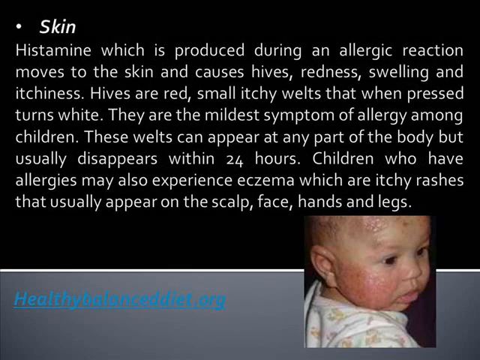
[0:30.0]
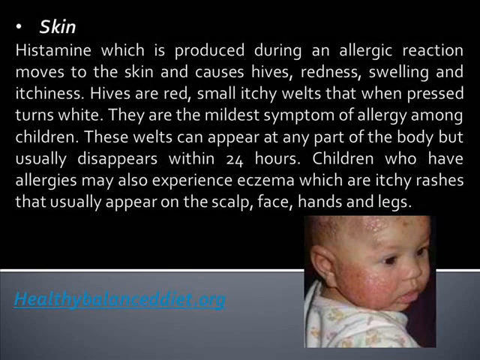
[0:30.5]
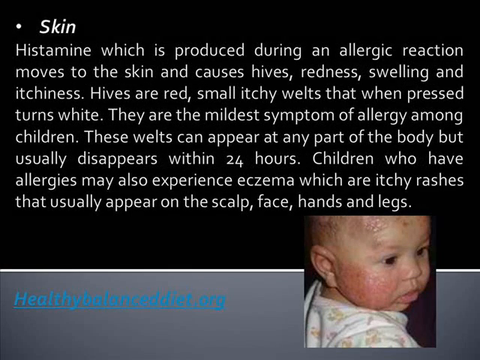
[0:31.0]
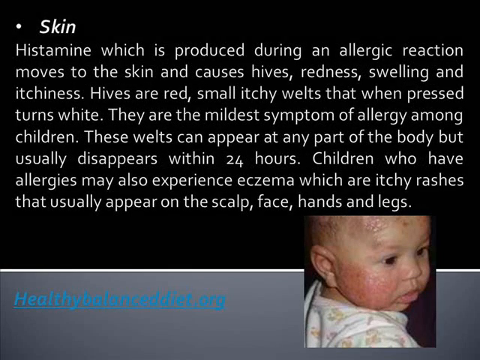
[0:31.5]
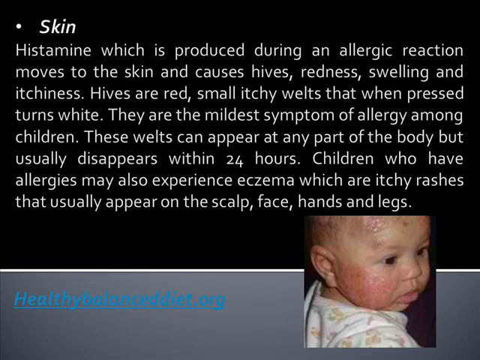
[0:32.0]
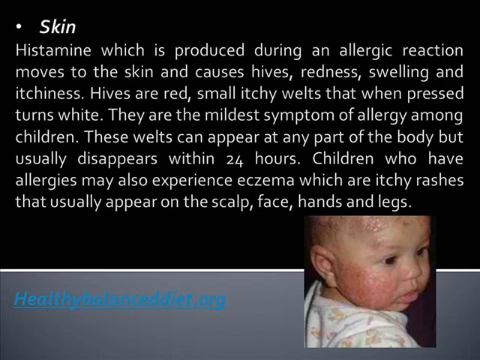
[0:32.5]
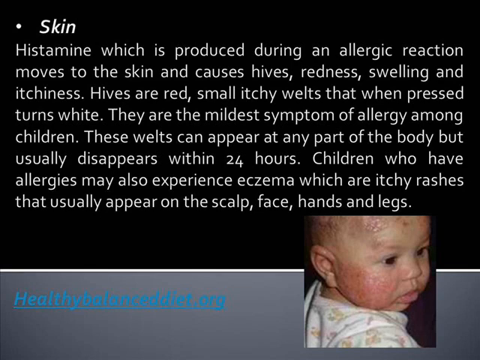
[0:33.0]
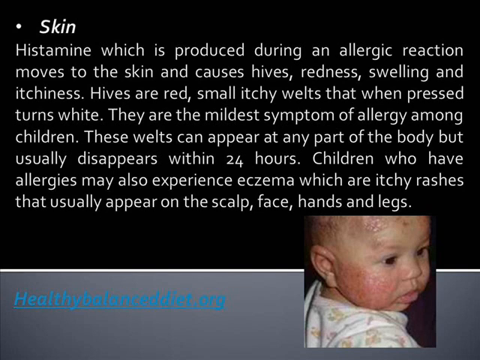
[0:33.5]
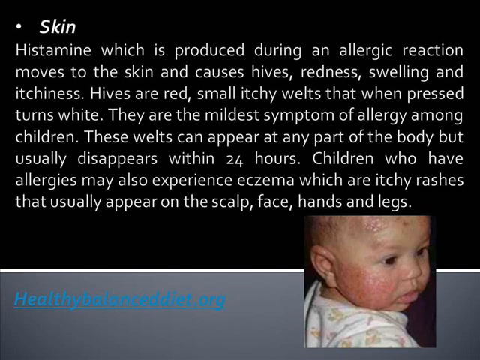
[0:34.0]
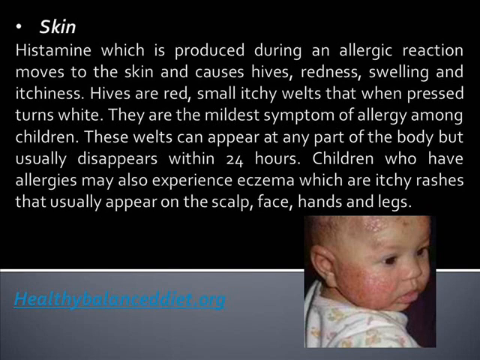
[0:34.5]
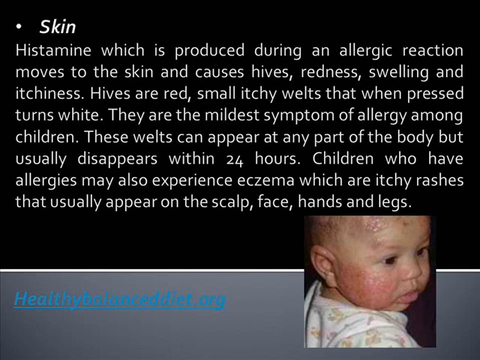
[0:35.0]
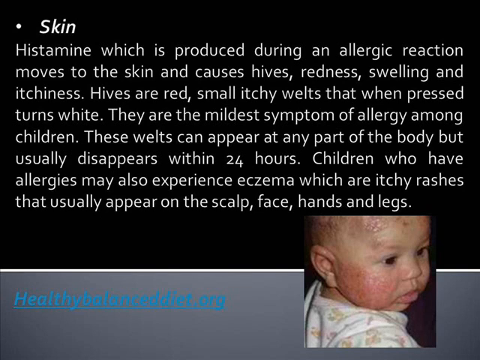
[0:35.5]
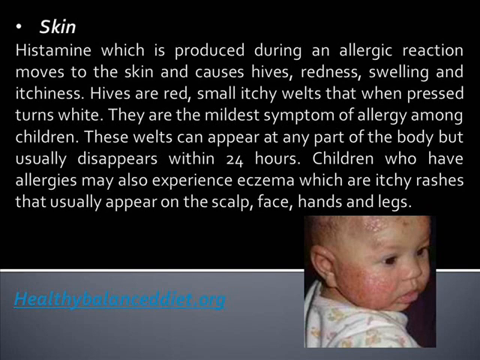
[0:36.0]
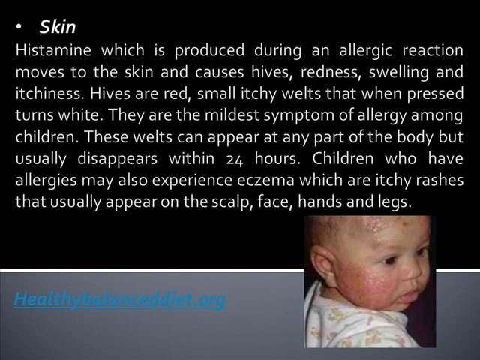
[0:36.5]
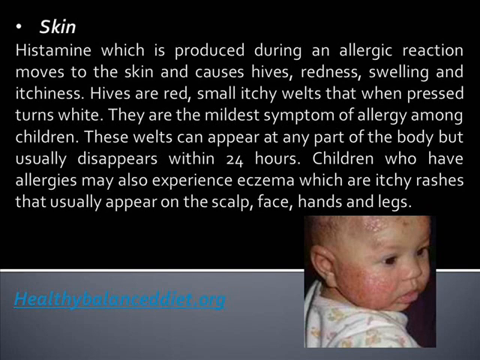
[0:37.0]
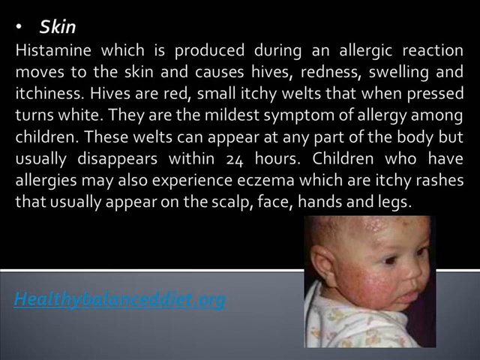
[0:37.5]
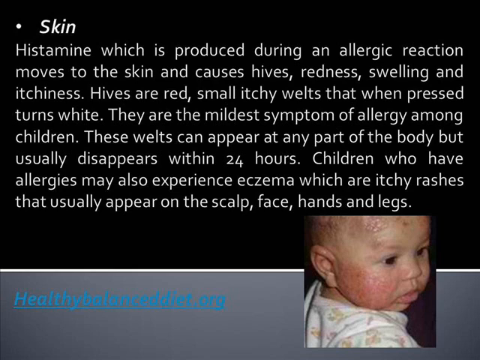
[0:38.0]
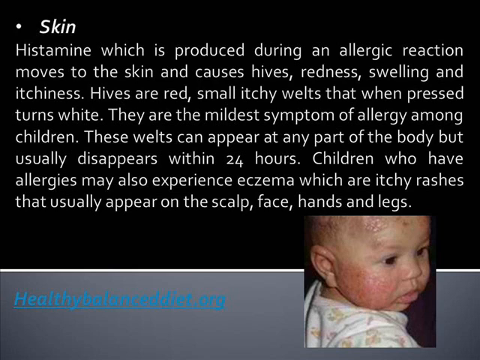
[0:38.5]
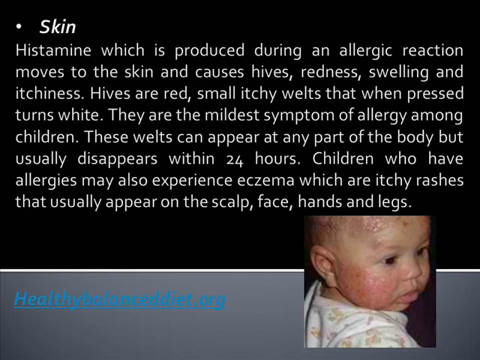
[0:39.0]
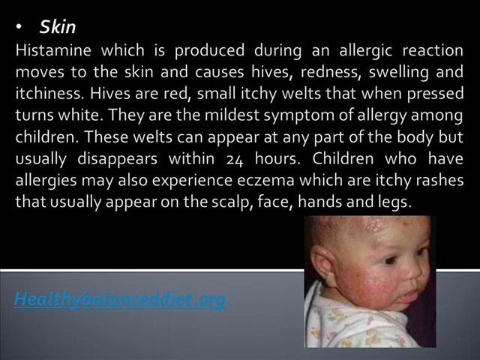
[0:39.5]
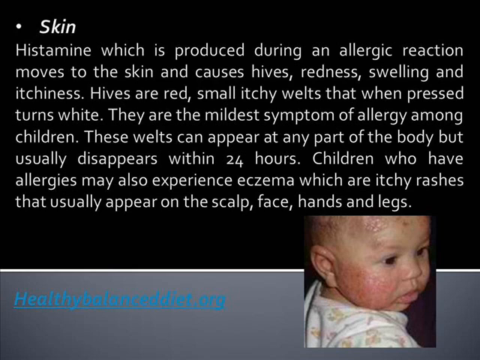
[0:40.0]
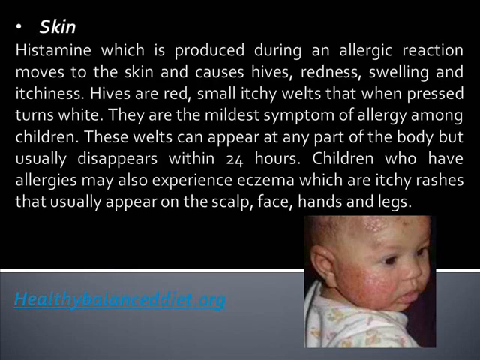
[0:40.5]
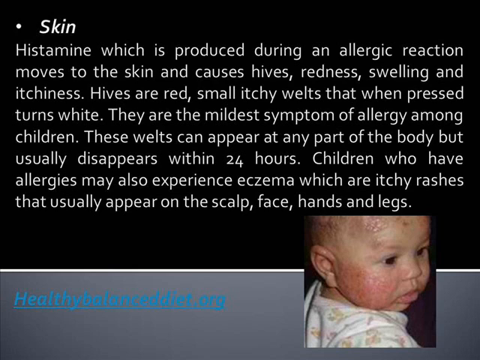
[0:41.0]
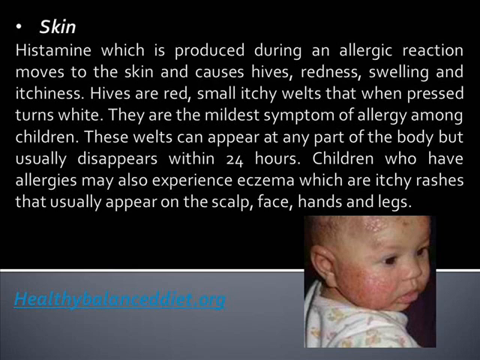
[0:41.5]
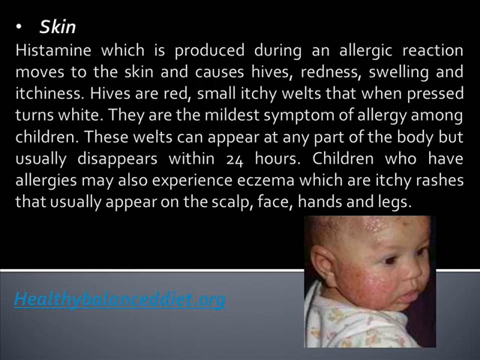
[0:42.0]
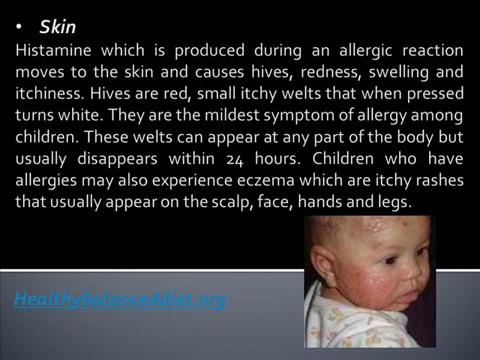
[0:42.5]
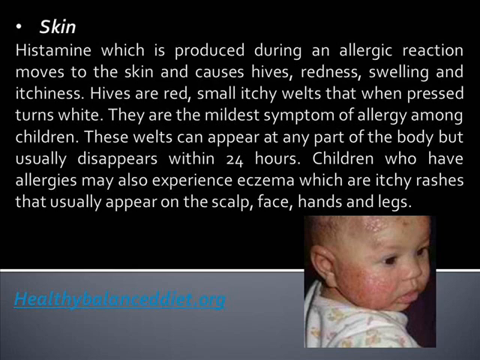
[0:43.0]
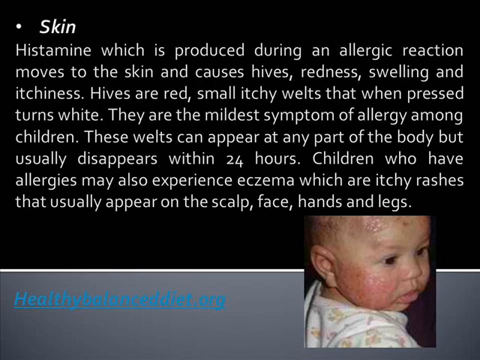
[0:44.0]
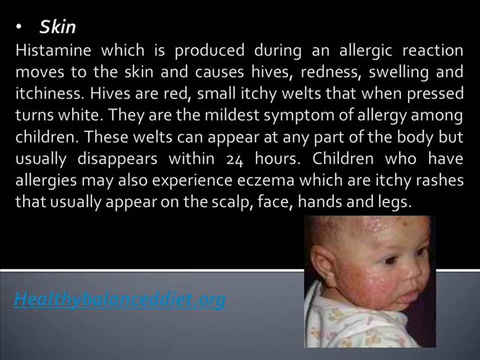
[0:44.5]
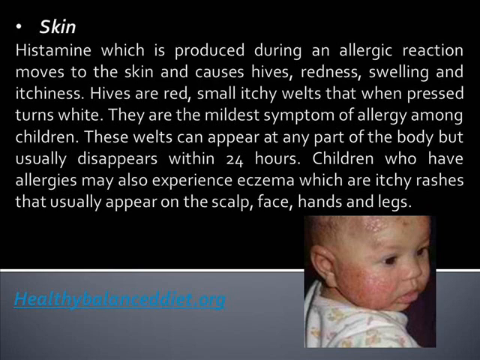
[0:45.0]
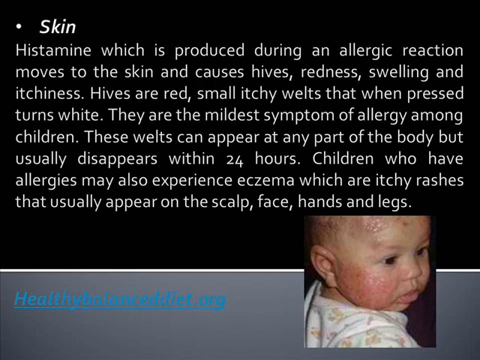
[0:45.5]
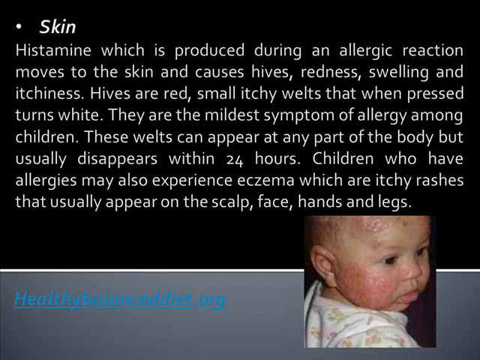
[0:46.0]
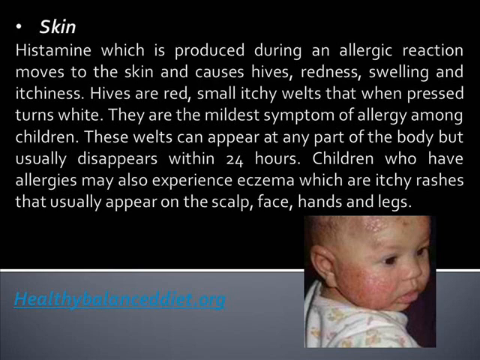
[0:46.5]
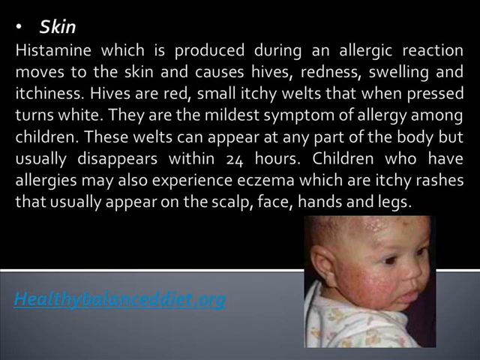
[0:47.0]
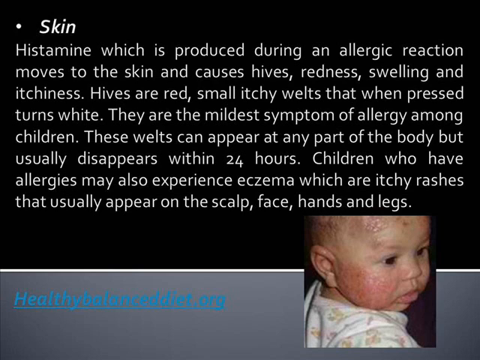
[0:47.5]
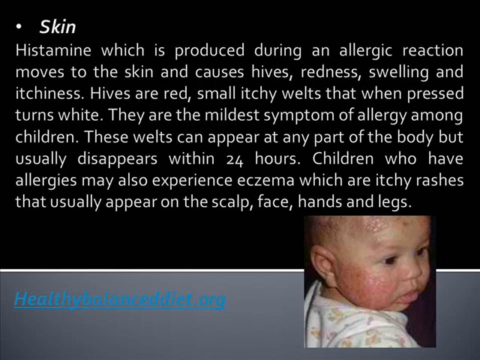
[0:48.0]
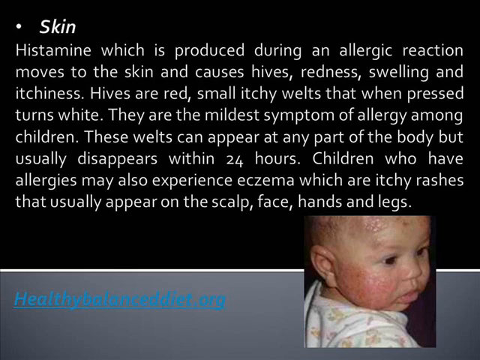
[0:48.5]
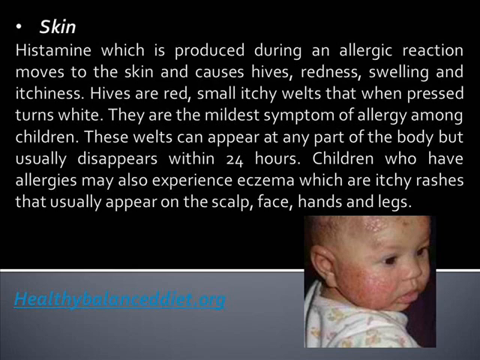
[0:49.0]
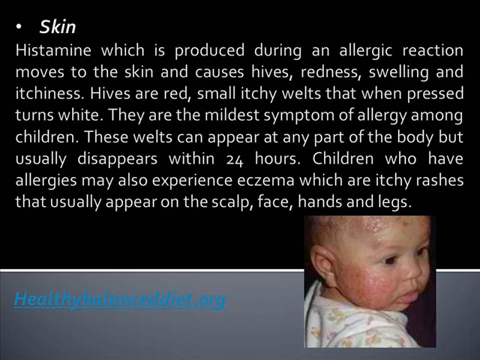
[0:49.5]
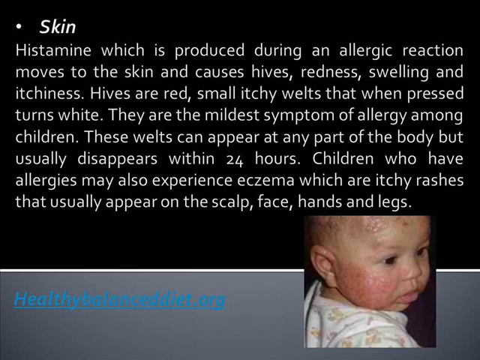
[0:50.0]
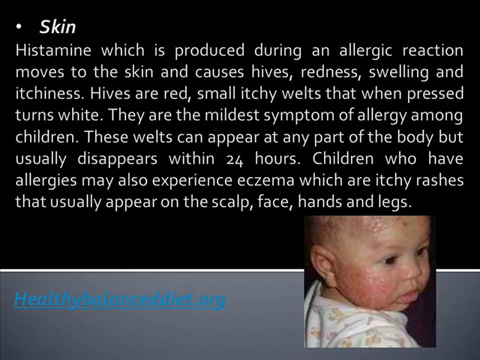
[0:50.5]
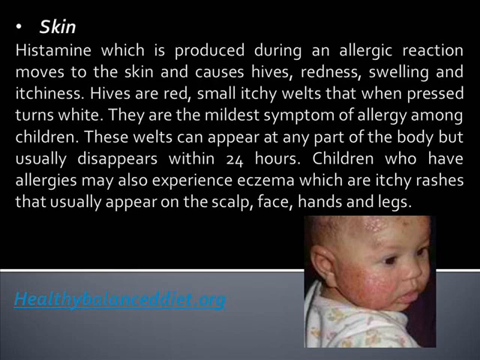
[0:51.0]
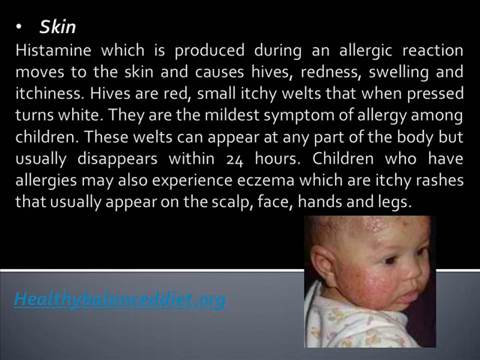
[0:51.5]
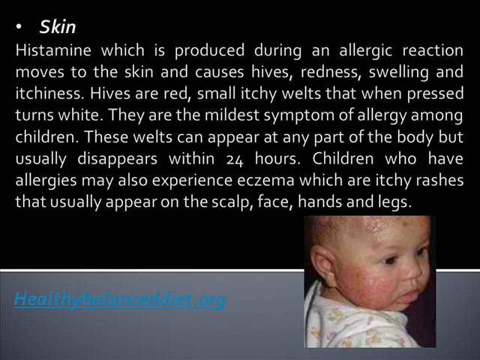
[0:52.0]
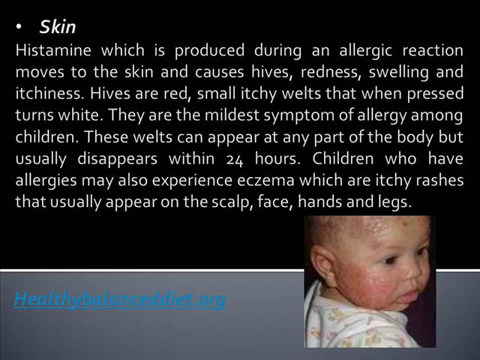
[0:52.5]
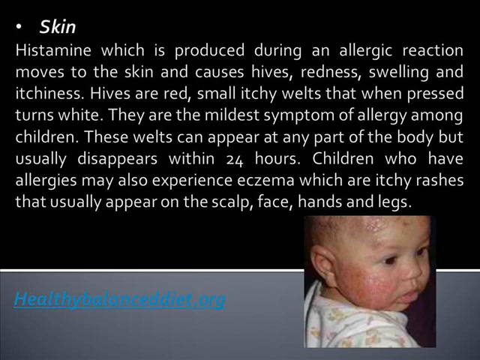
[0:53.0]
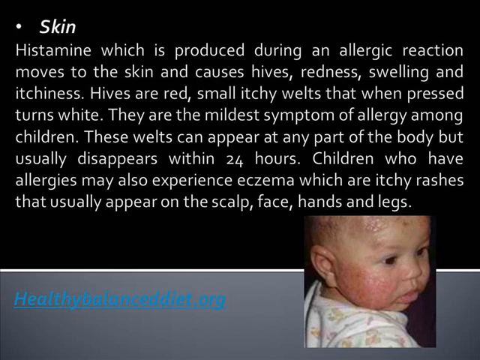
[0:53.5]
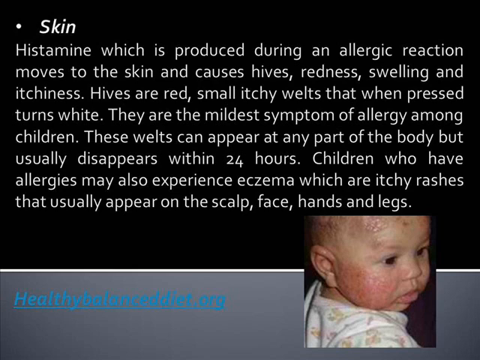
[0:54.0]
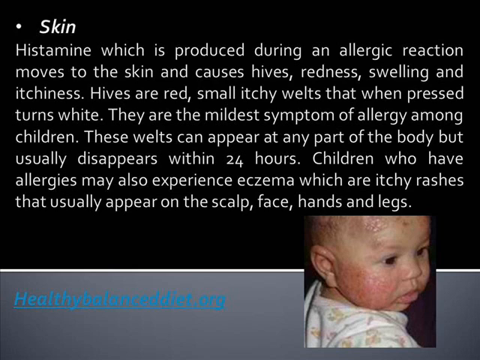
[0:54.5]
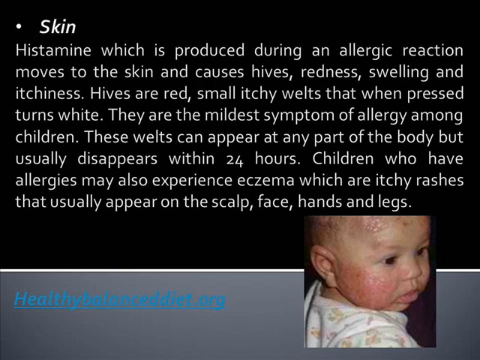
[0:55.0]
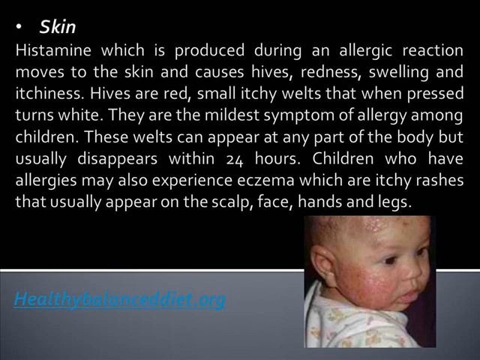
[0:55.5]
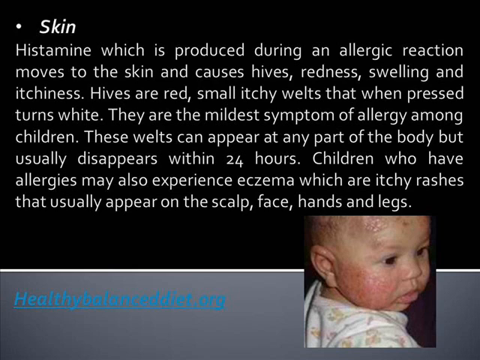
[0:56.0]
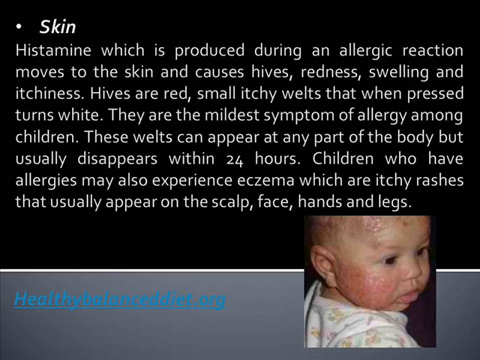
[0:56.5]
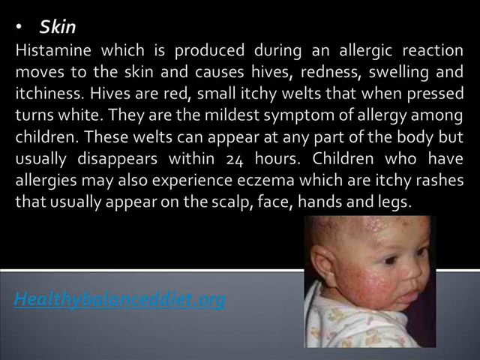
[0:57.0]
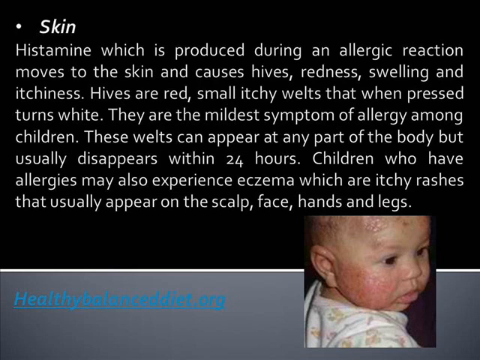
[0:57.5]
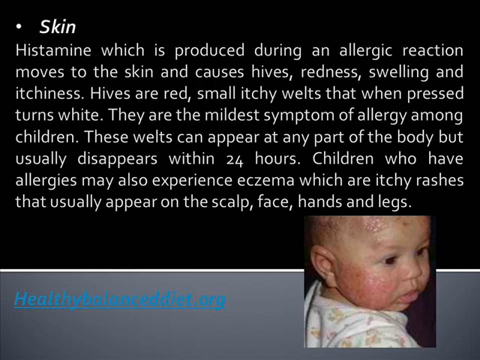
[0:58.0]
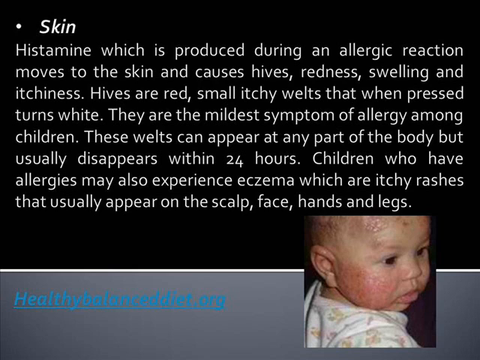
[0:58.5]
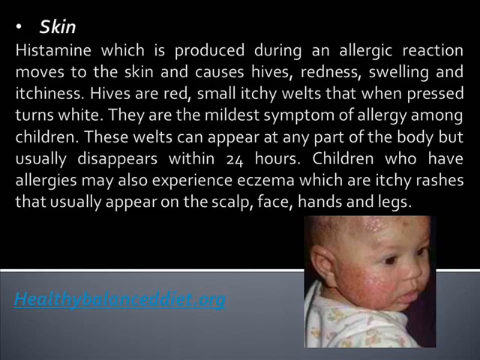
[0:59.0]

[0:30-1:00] The same histamine text remains on screen. At the upper left it is titled "Skin" in bolder white text with a bullet point. In the lower right is a picture of a toddler looking over to the right, toward the lower right corner, so his right ear is visible. He wears a lighter-colored top, of which only the shoulder shows; the picture is mostly his face, and the top of his head is cut off. He has dark eyes and appears to have hives on his cheeks and forehead, apparently as an example of the symptom. In the lower left, a website in blue on the gray banner reads "healthybalanceddiet.org". The same graphic stays on screen for quite a while. The title is white sans-serif text, and the text underneath is also sans-serif, with capitals only at the start of each sentence.